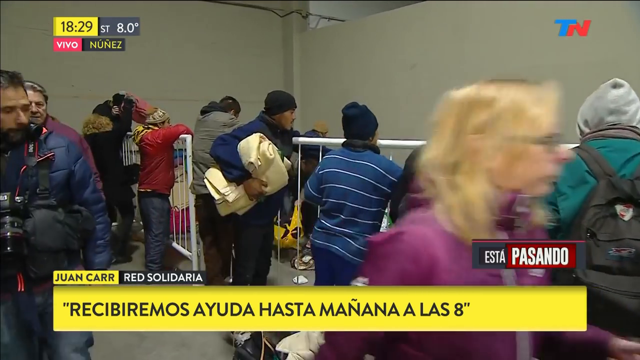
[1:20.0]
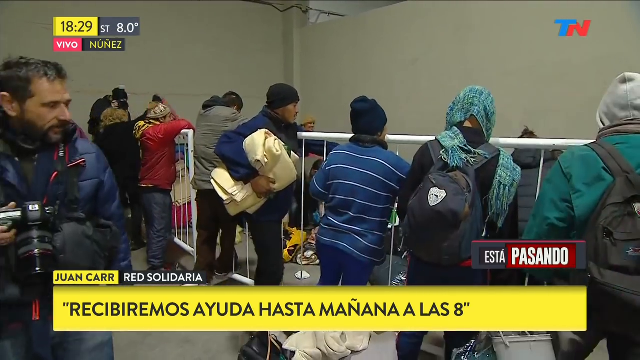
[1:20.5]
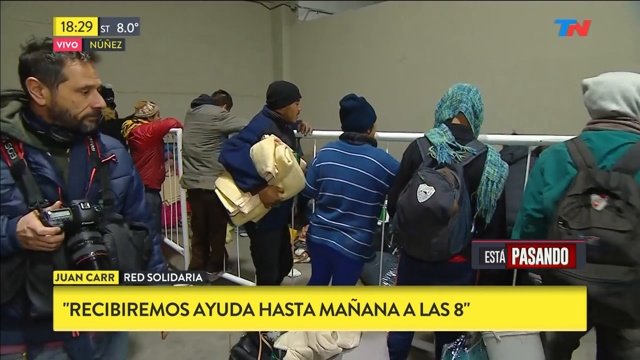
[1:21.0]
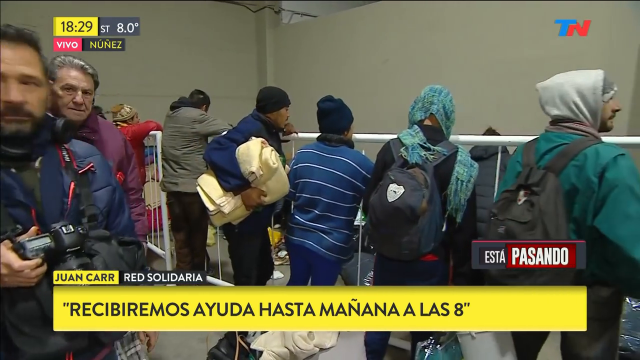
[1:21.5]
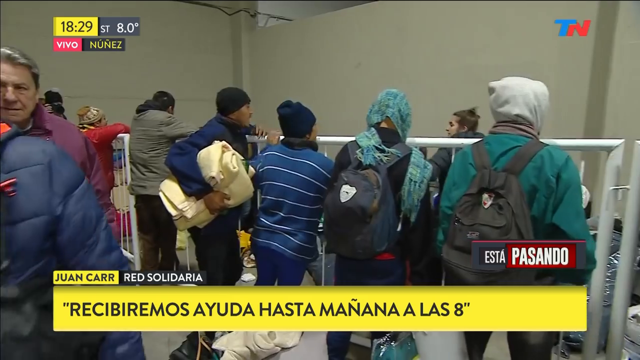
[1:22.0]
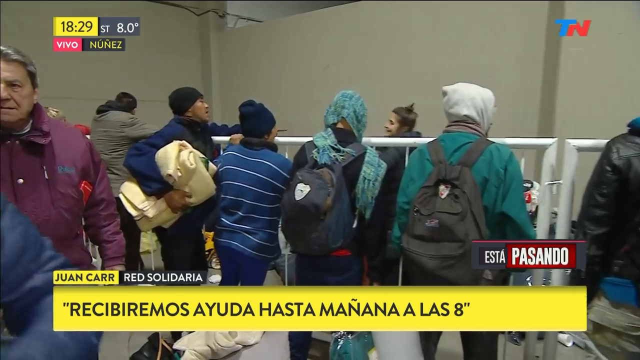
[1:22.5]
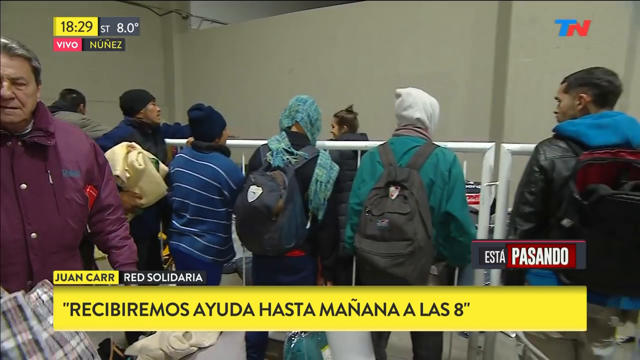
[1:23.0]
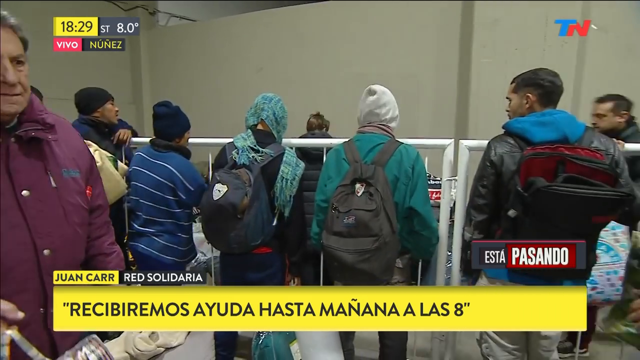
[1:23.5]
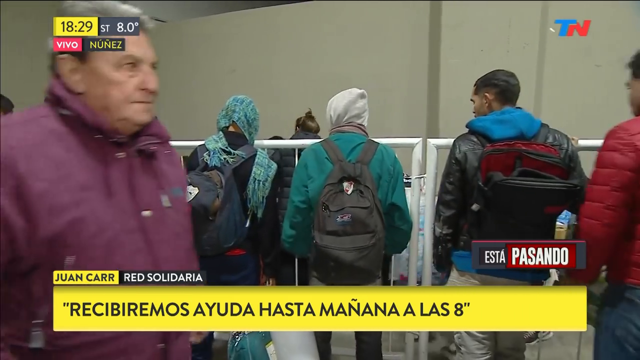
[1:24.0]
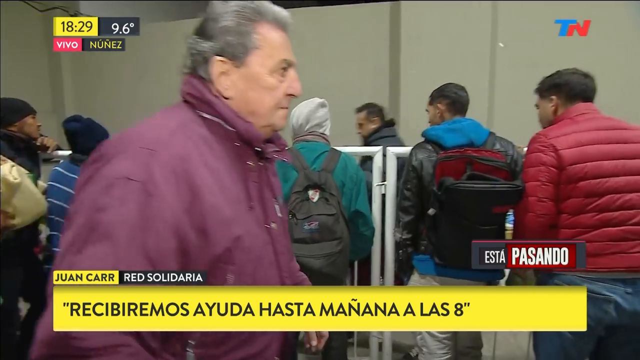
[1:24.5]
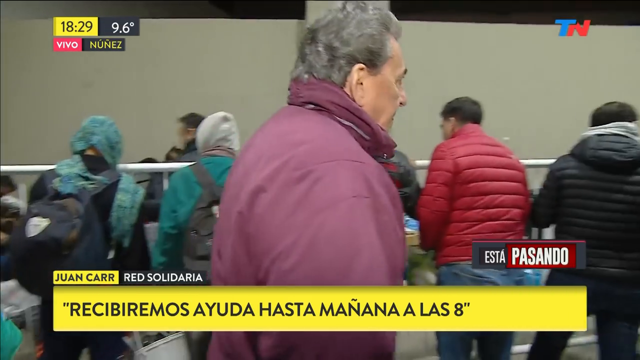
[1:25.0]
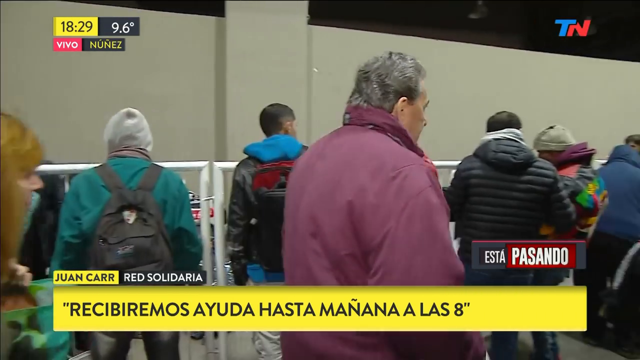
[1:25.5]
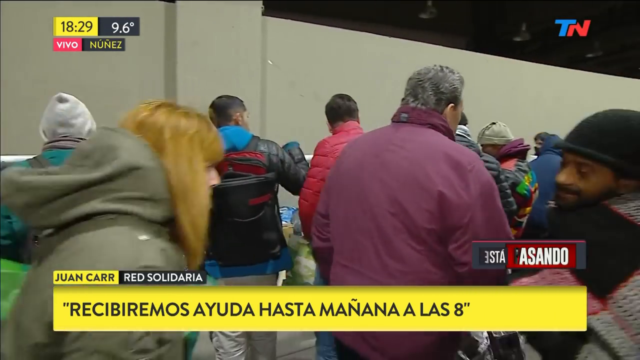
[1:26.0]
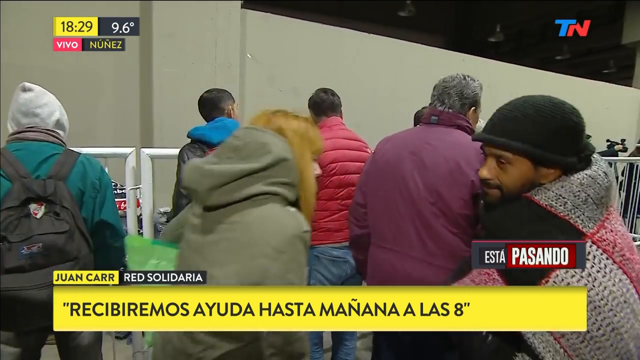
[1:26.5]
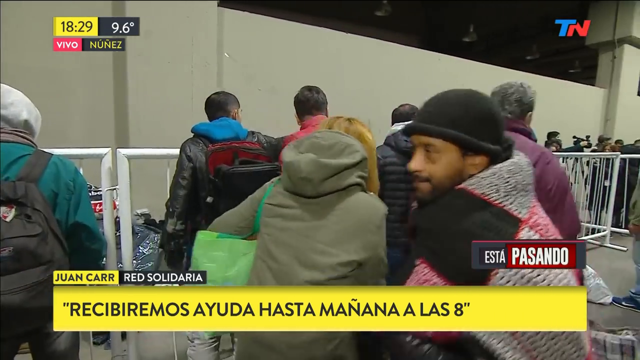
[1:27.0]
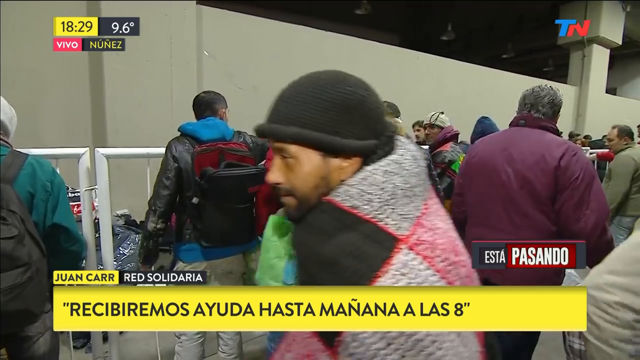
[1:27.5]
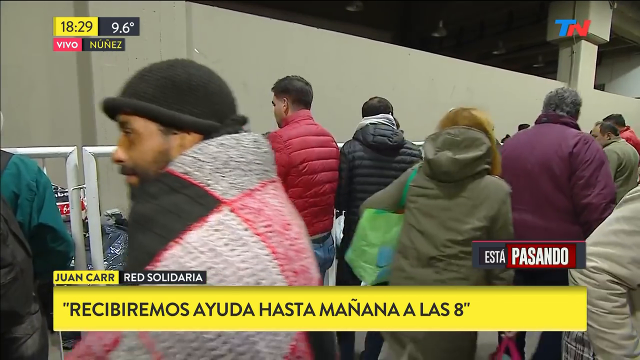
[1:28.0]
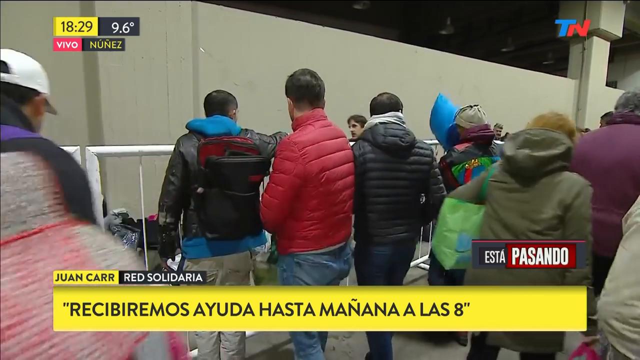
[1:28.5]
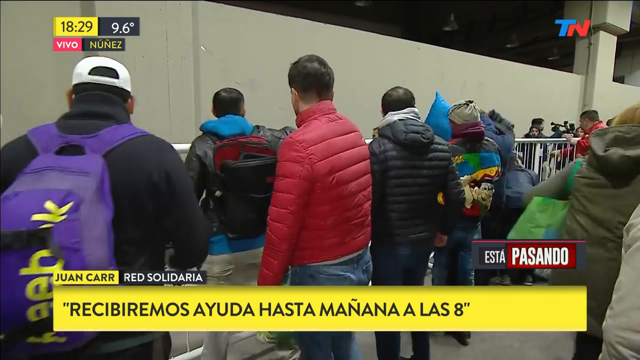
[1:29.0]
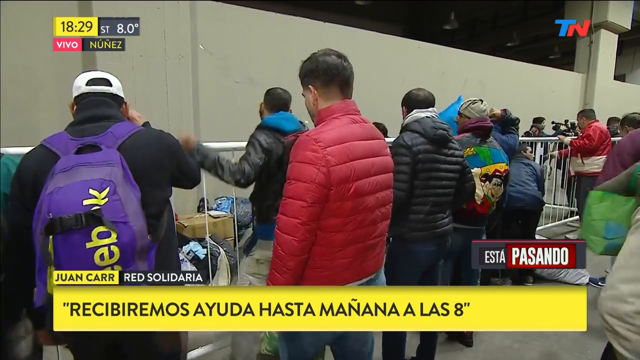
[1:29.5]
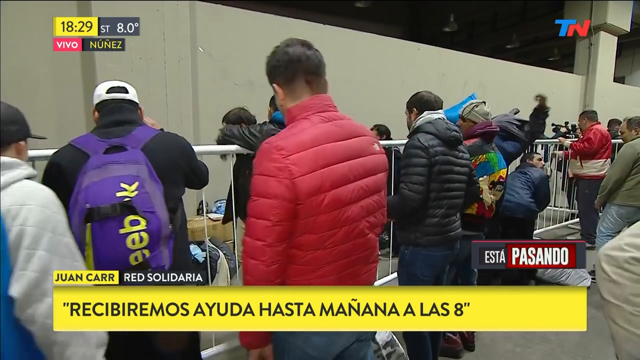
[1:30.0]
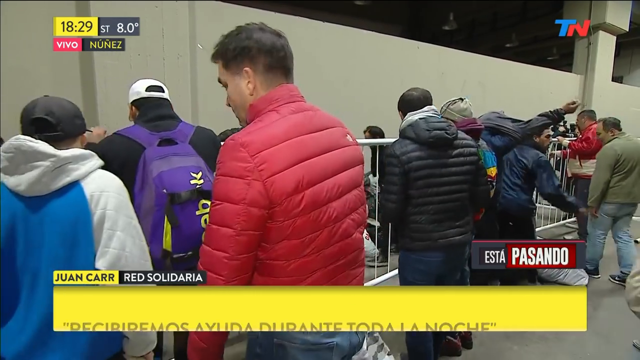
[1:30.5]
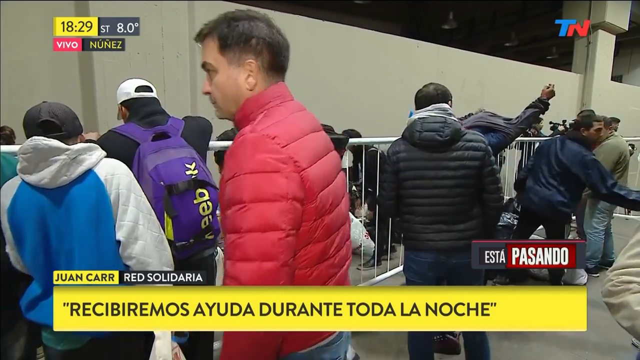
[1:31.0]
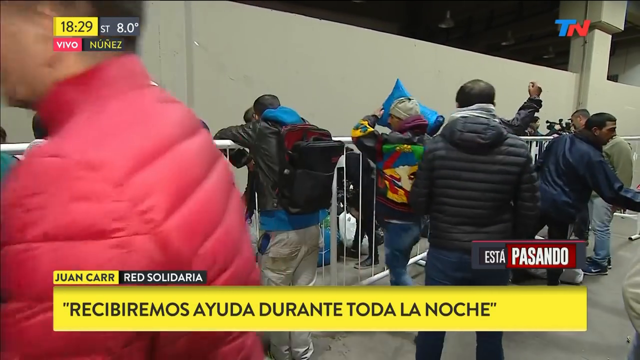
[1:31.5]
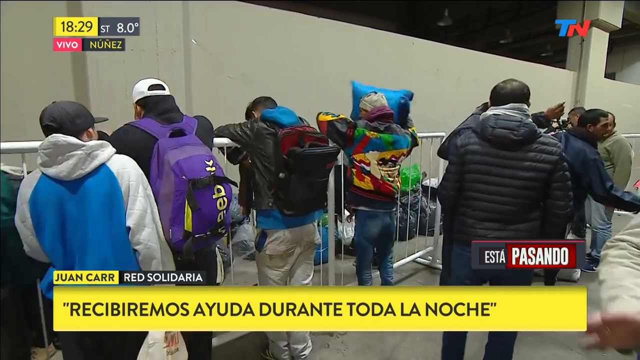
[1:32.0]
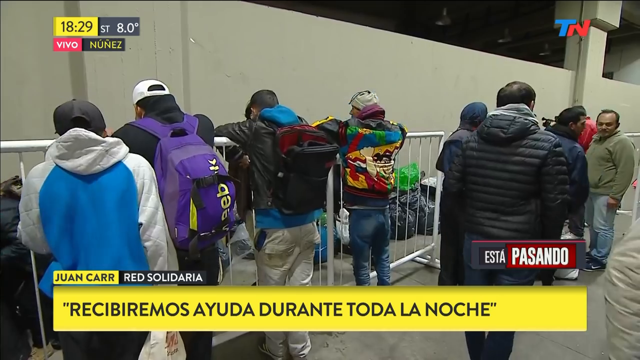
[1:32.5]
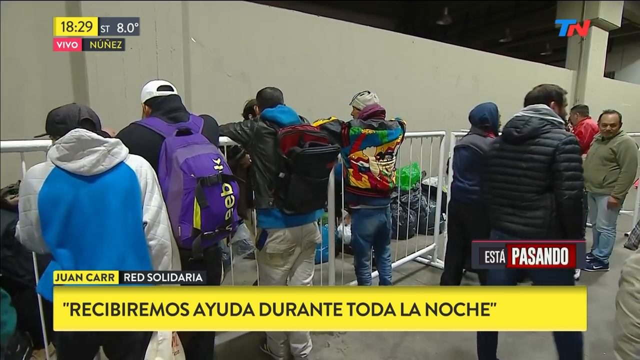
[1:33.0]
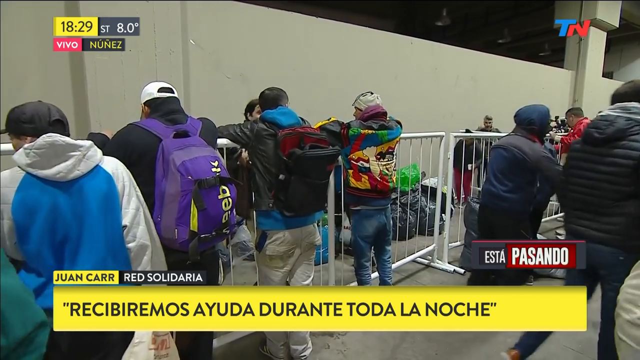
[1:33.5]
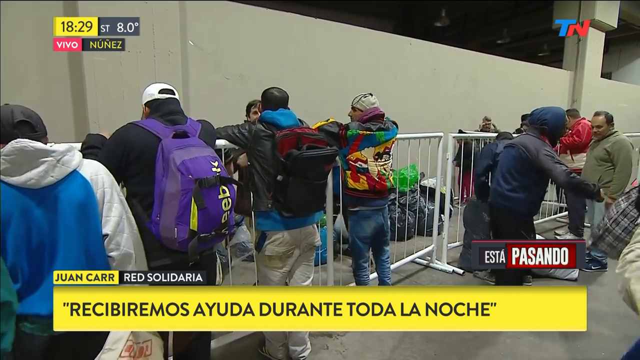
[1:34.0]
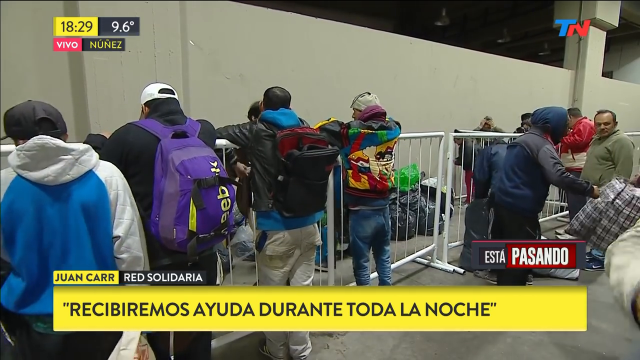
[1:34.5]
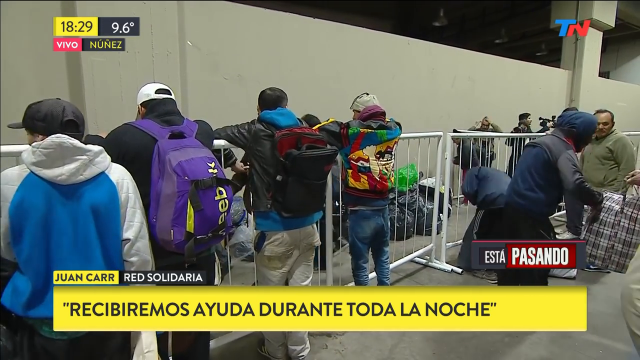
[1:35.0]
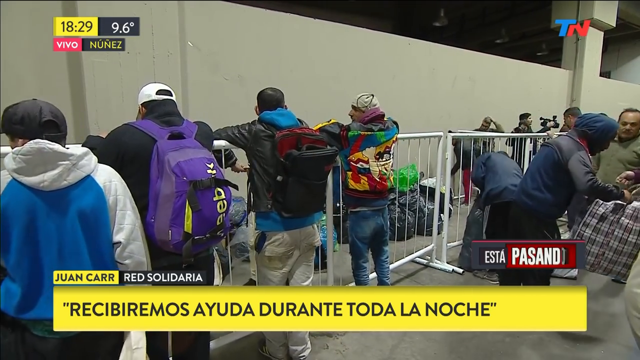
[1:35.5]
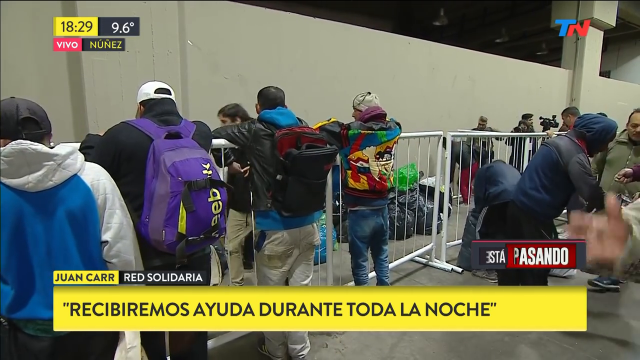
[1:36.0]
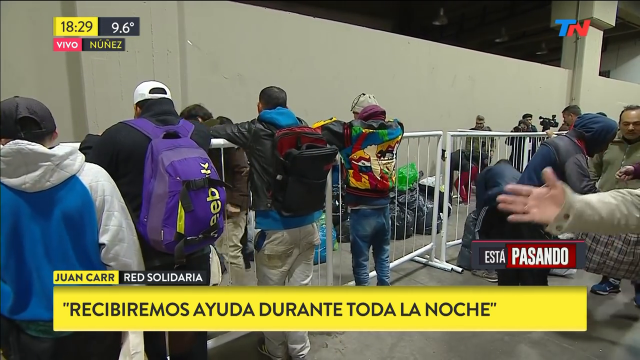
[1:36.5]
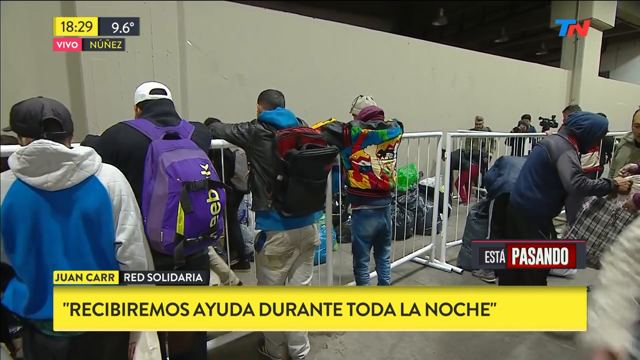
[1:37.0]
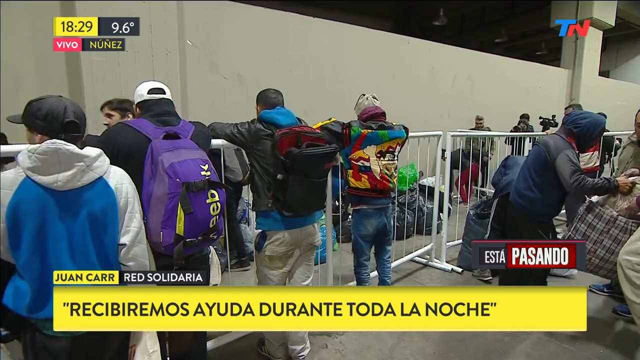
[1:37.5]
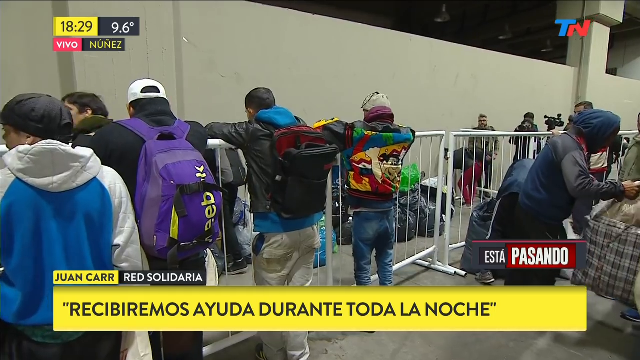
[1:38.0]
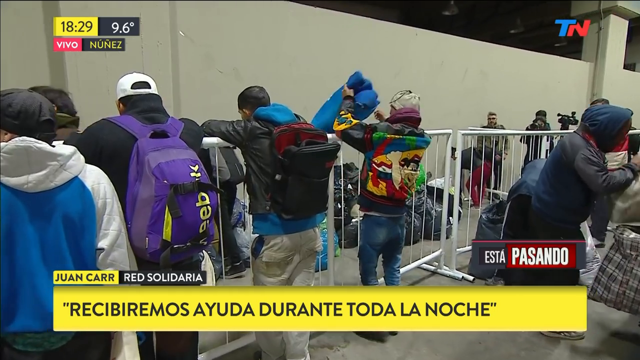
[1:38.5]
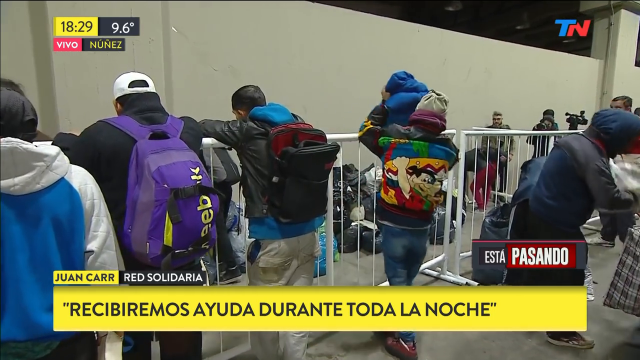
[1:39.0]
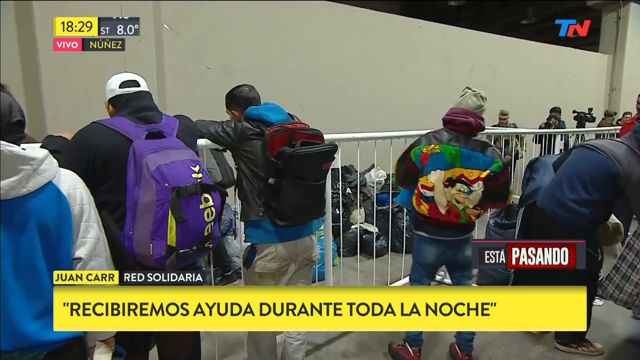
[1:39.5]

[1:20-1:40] A group of people is shown; most of them have backpacks, and others hold blankets. They wear clothes of different colors and designs and seem happy.